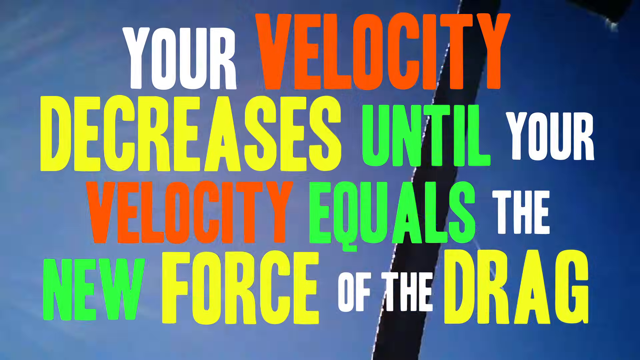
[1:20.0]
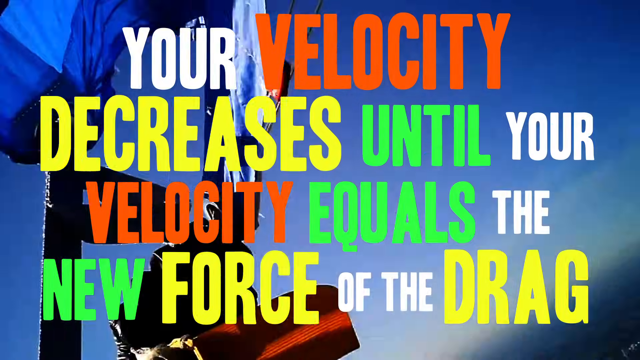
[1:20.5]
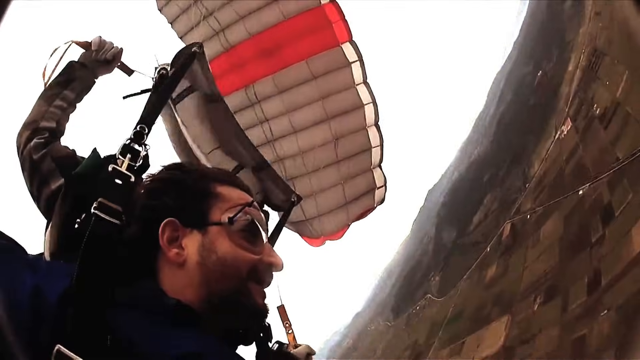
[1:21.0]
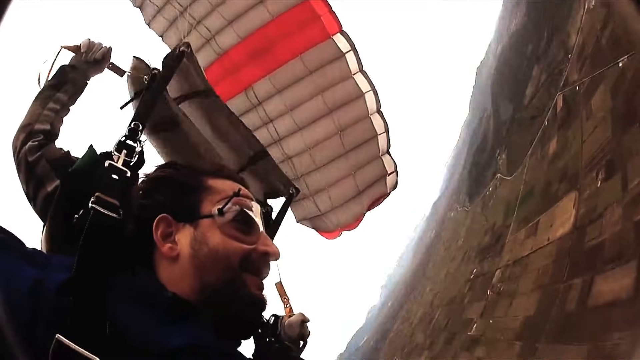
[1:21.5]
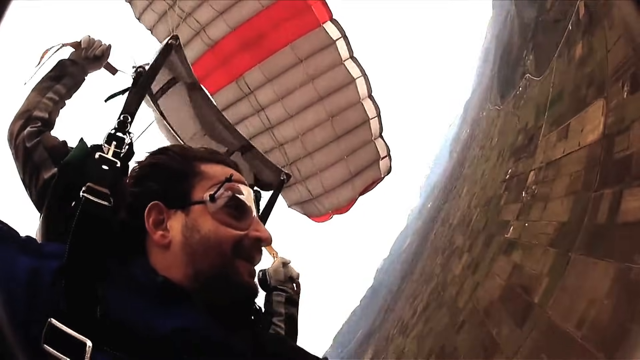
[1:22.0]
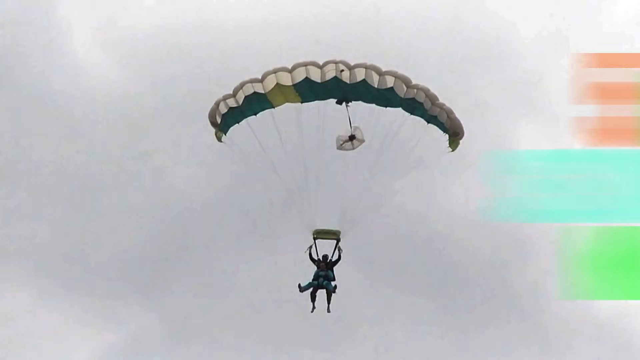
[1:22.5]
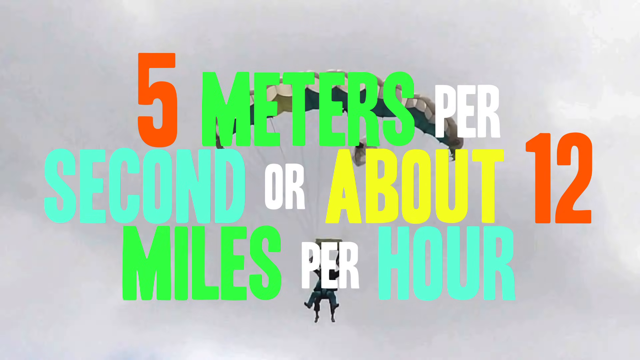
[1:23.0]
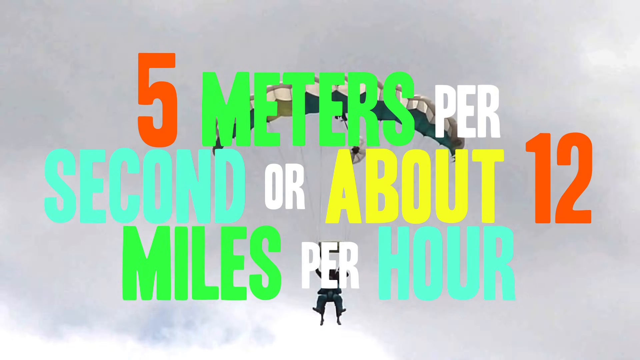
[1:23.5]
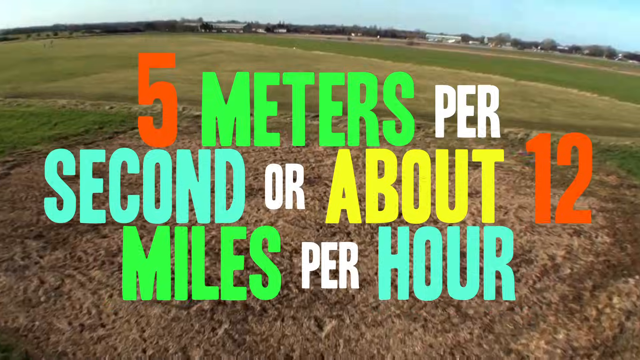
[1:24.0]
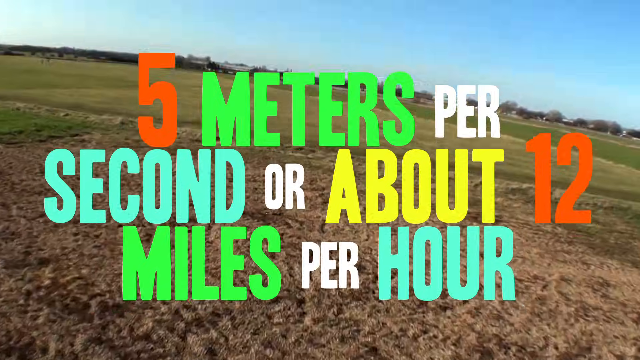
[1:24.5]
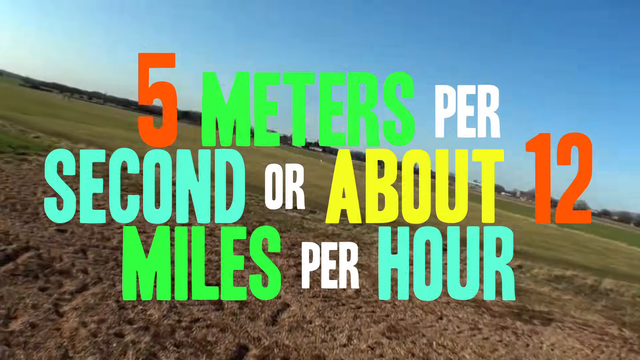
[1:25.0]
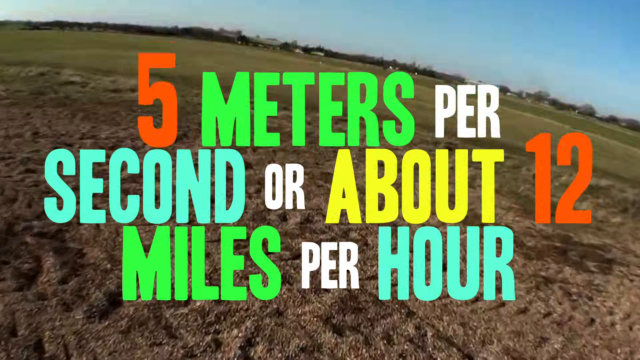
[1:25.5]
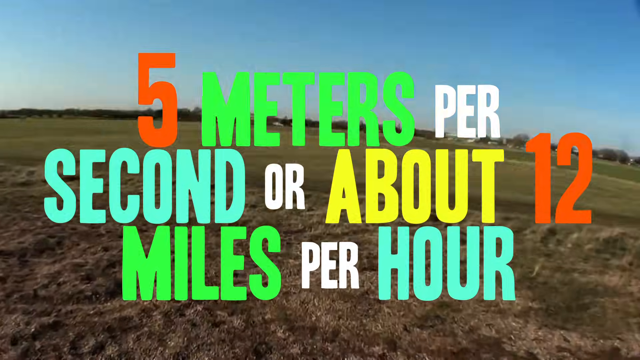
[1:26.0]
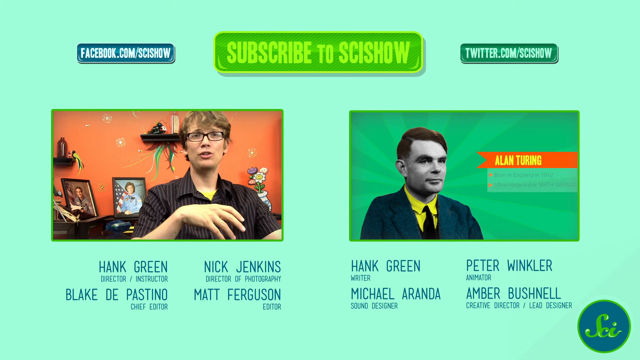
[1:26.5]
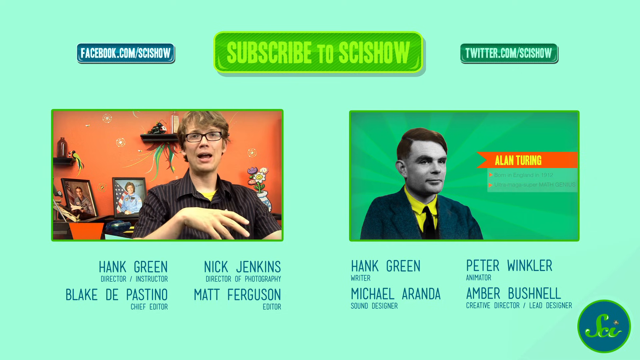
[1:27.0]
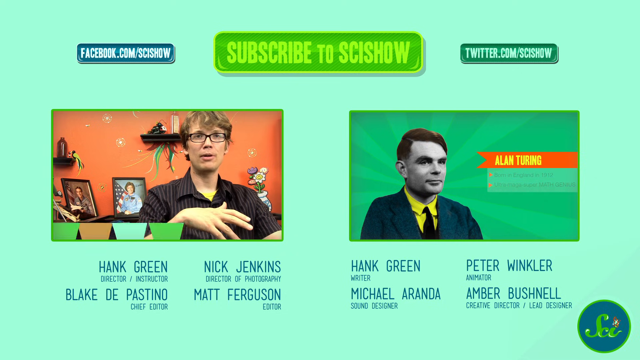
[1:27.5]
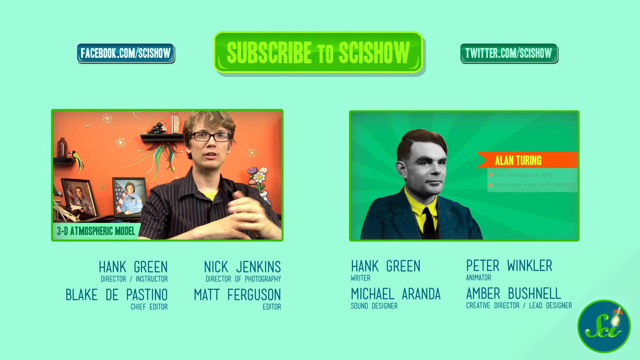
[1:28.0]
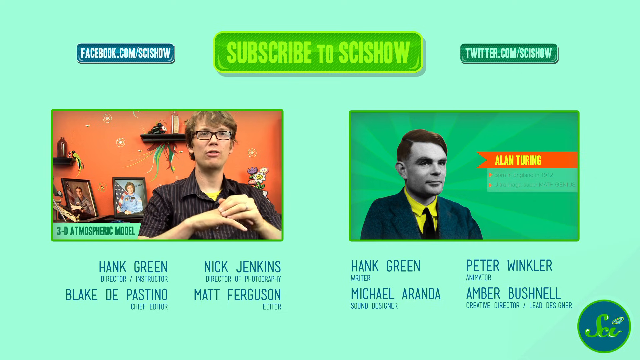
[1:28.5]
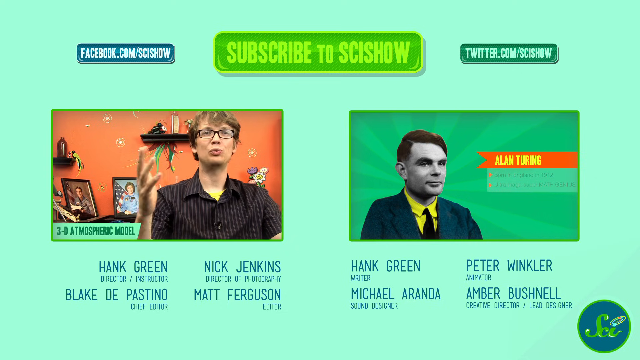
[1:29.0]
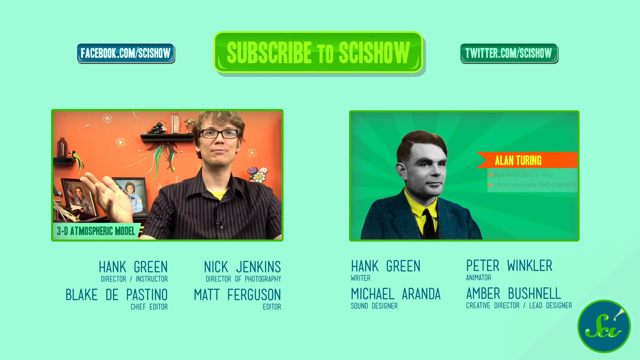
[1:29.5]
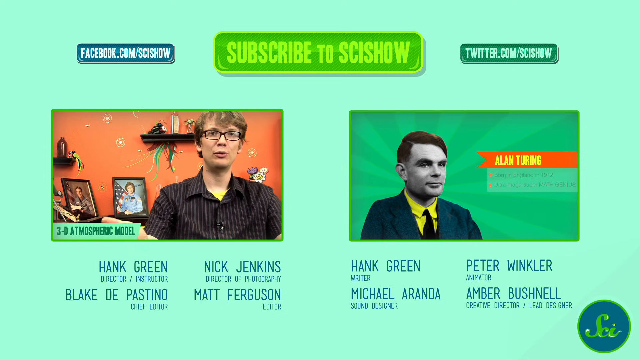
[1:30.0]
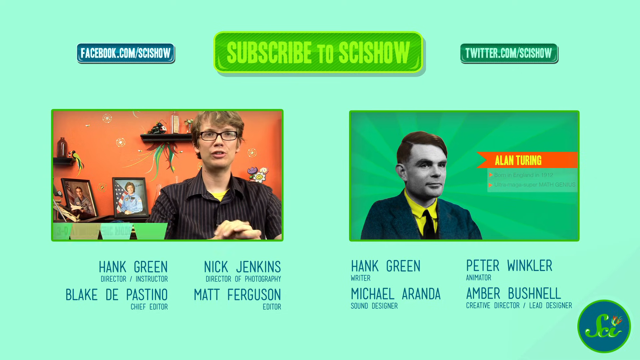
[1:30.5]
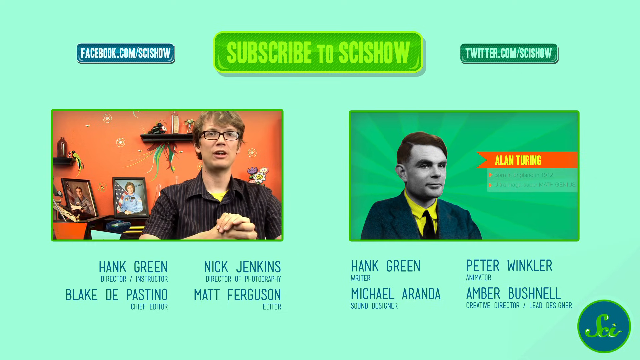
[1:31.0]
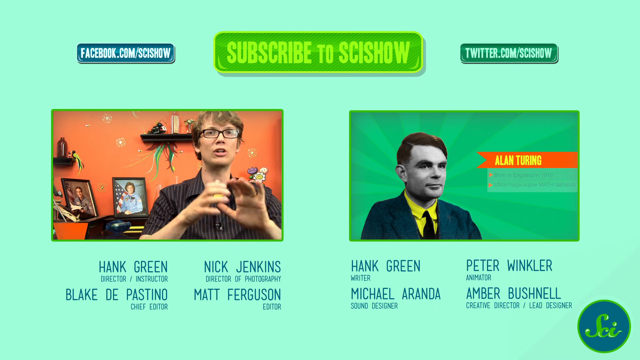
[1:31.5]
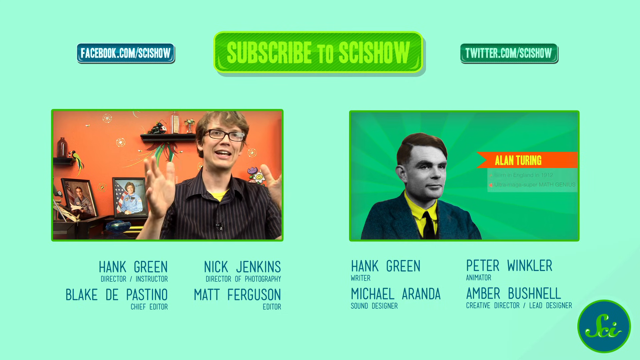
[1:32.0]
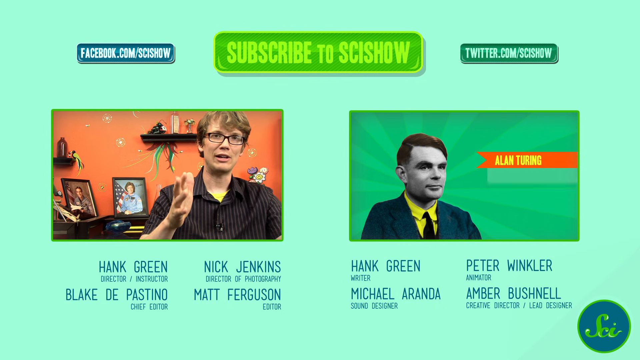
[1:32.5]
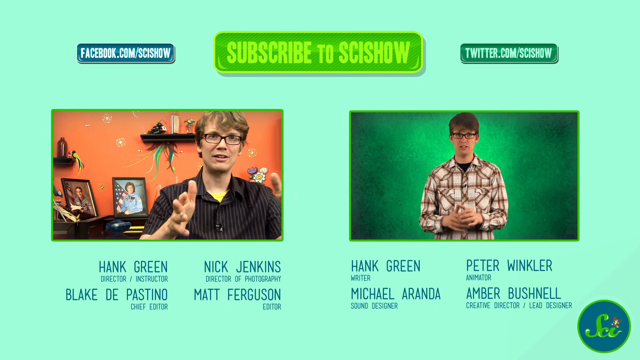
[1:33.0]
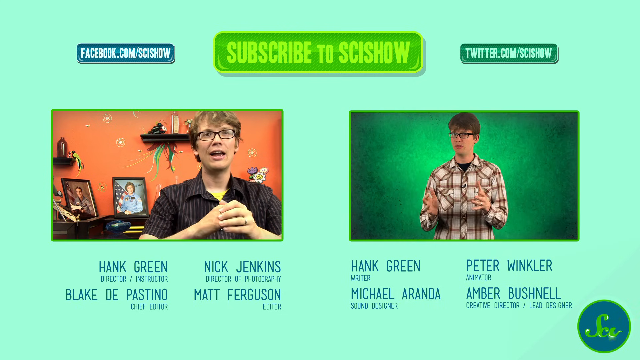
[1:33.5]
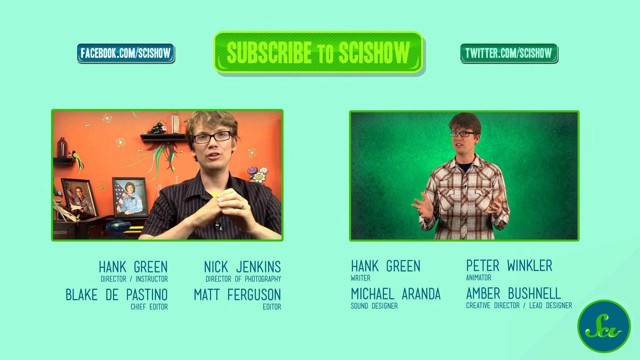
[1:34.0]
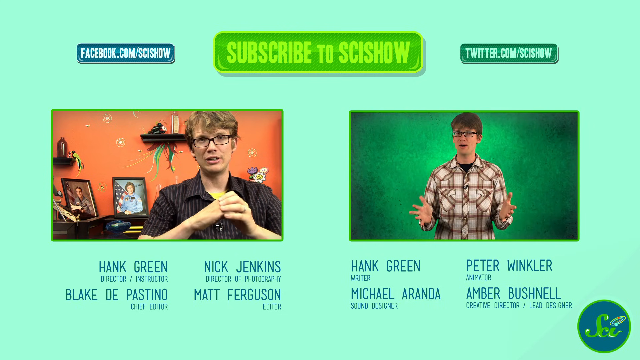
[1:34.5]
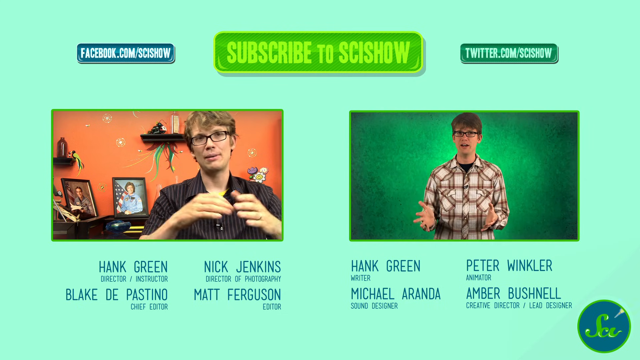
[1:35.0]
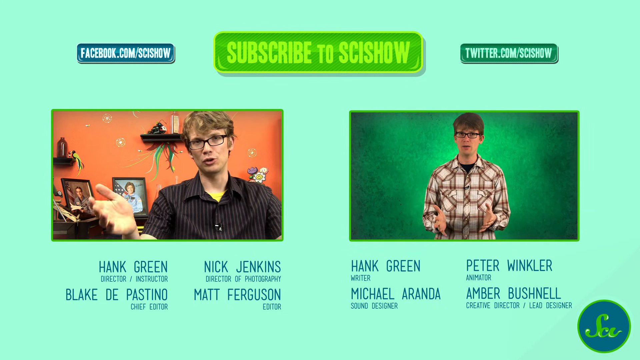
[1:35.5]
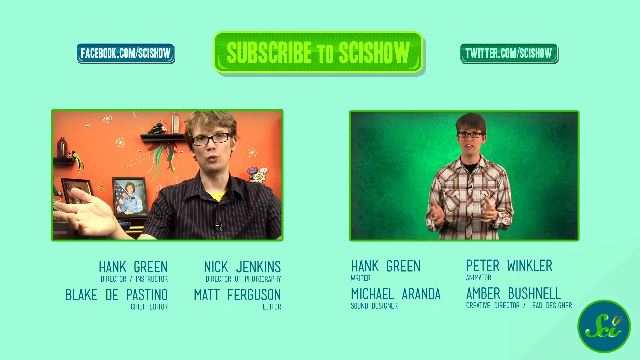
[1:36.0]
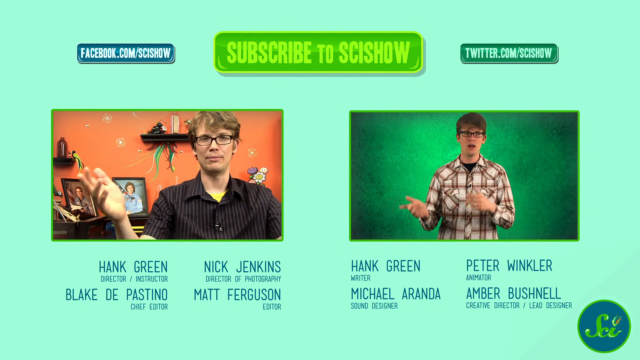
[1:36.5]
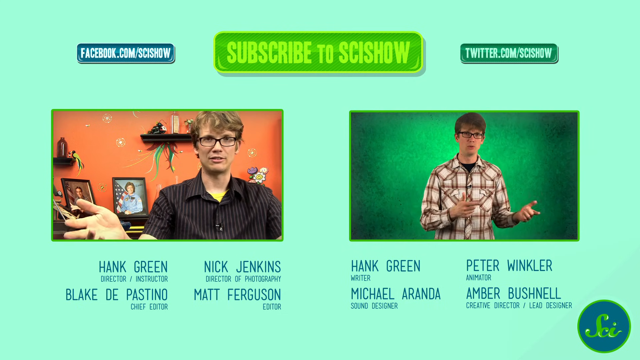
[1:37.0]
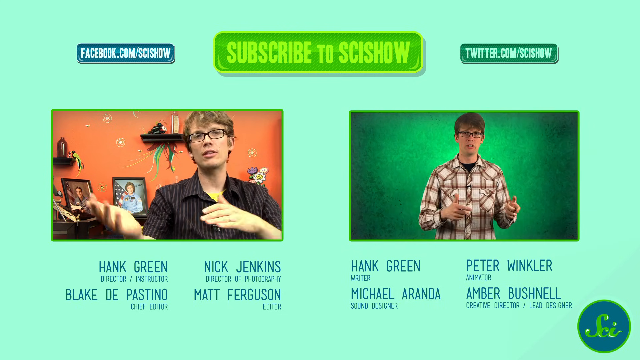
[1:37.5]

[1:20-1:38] Skydivers come down toward the ground with their parachute open as text reads "five meters per second or about 12 miles per hour," and they are seen landing from their own perspective. An outro screen follows with various logos: a Twitter banner in the upper right corner, a Facebook banner in the upper left, and in the middle the text "subscribe to SciShow" with a green clickable button. Two video screenshots are displayed: one of a young man in a dark dress shirt with shaggy blonde hair, with an orange wall and photographs behind him, and the other an image of a man labeled "Alan Turing."